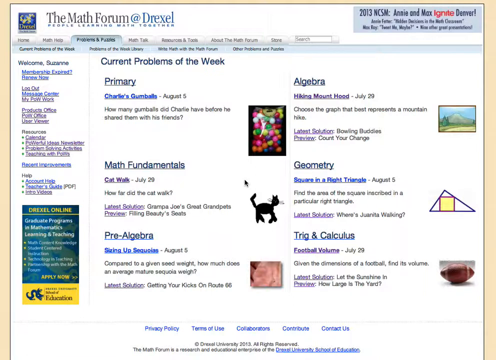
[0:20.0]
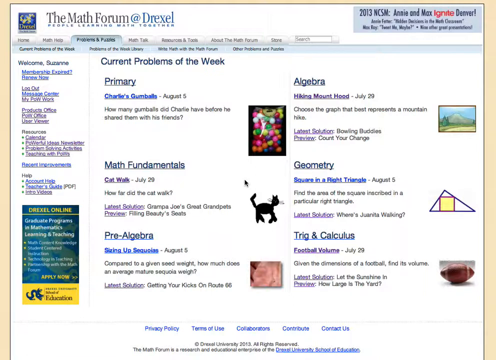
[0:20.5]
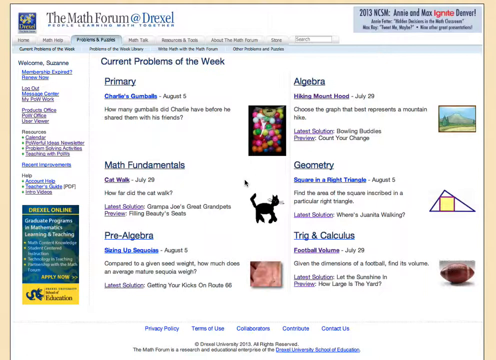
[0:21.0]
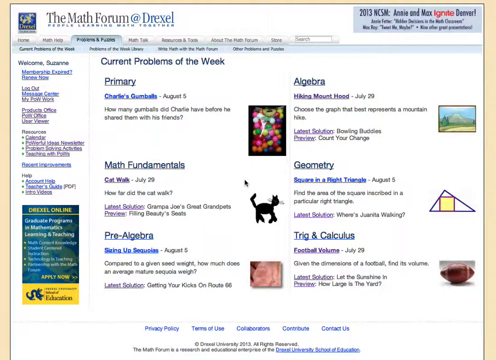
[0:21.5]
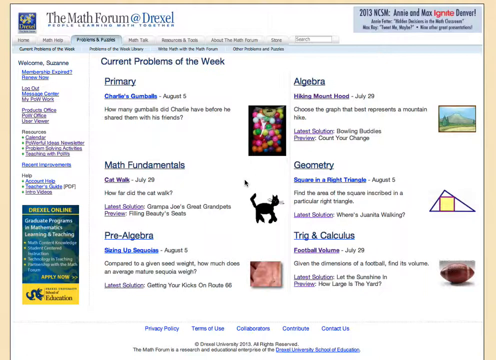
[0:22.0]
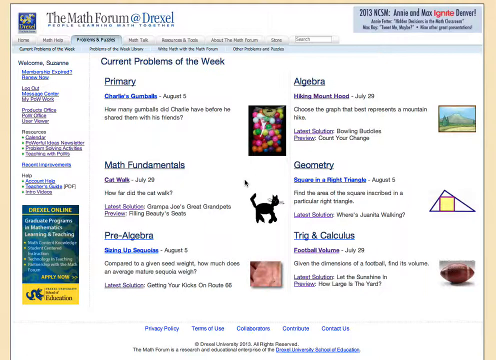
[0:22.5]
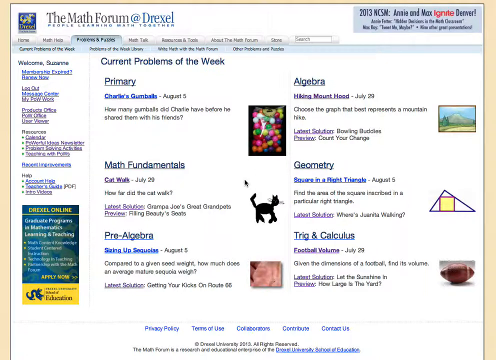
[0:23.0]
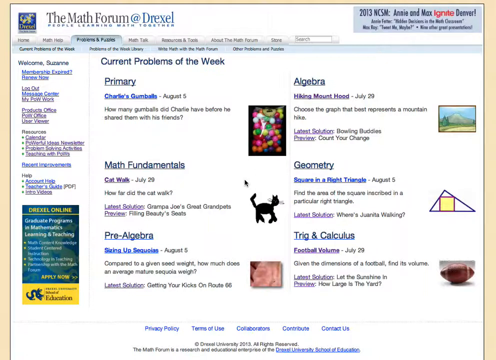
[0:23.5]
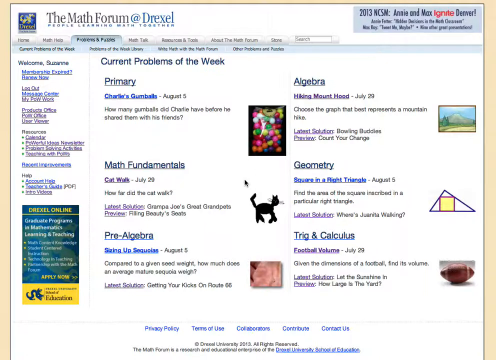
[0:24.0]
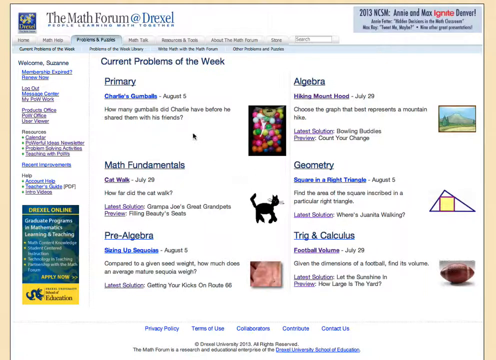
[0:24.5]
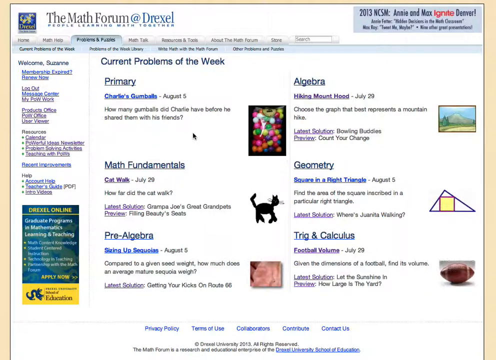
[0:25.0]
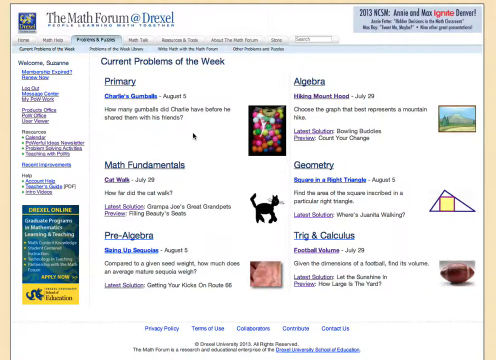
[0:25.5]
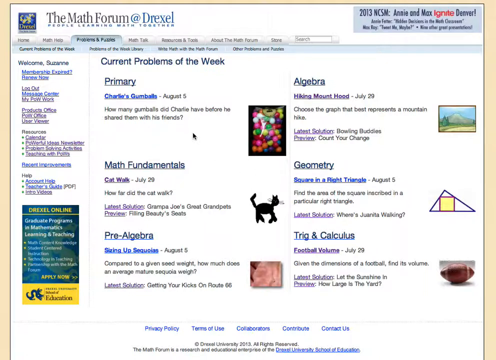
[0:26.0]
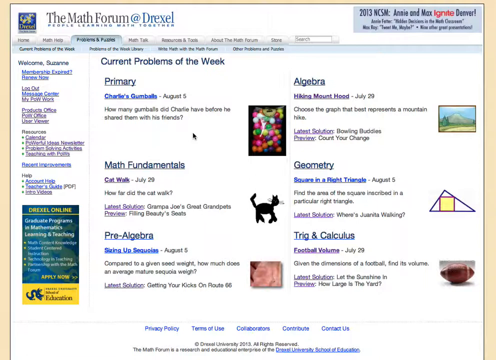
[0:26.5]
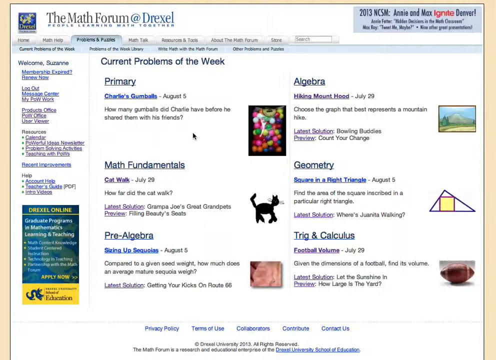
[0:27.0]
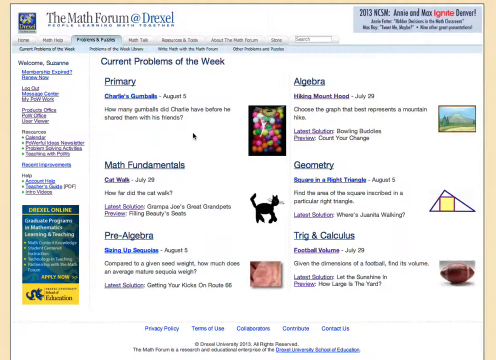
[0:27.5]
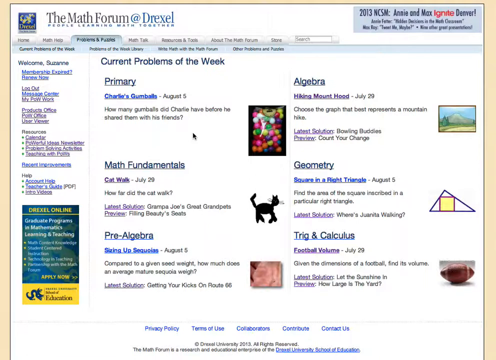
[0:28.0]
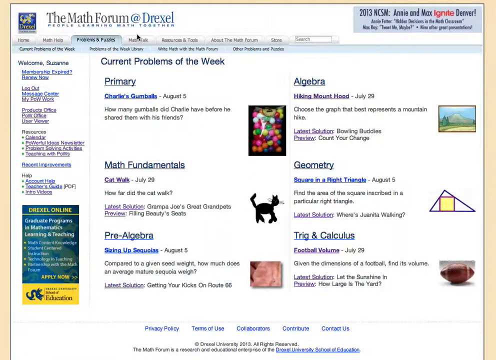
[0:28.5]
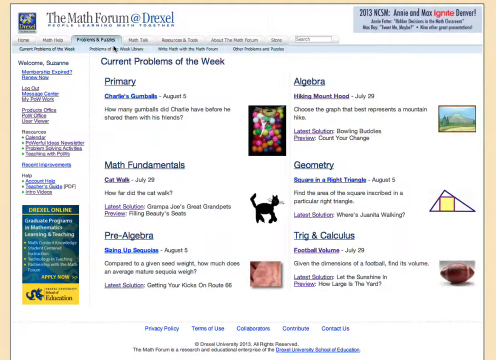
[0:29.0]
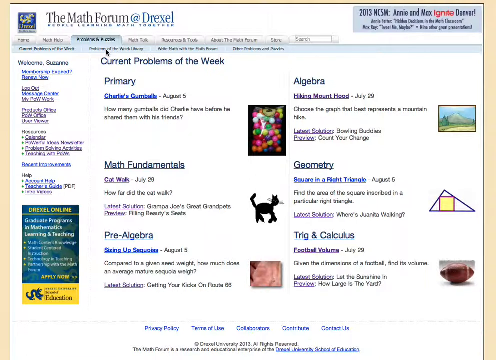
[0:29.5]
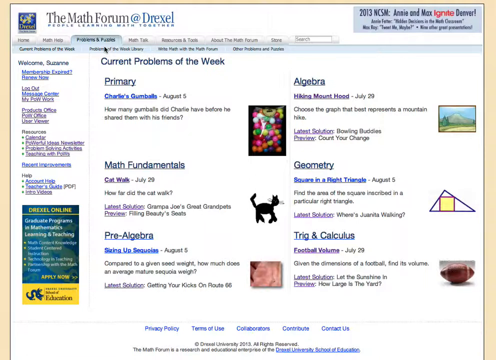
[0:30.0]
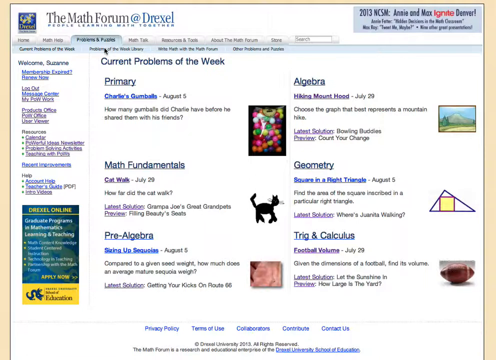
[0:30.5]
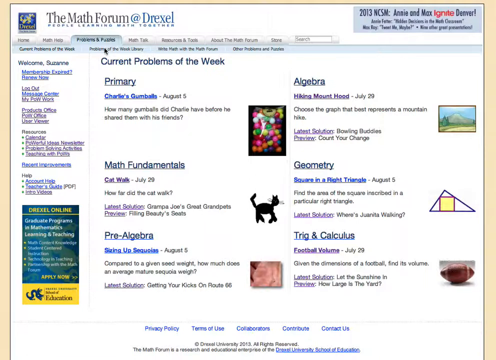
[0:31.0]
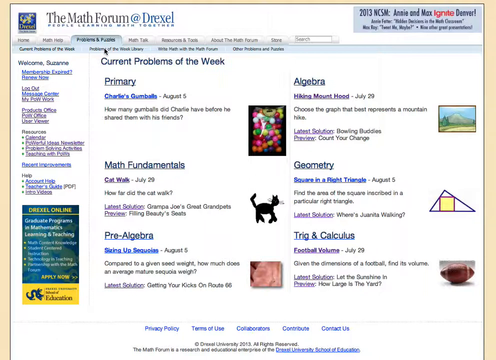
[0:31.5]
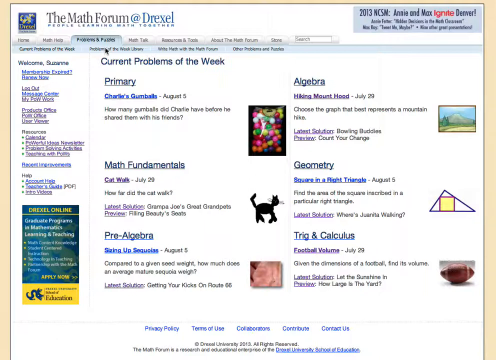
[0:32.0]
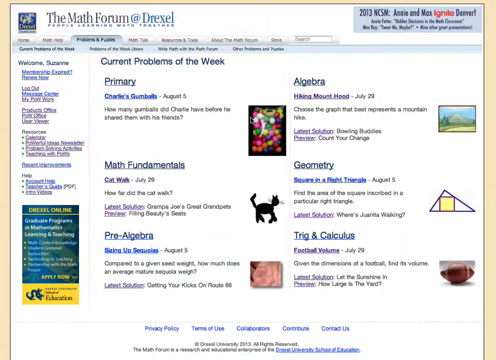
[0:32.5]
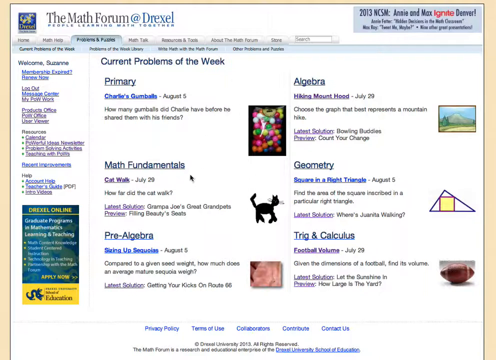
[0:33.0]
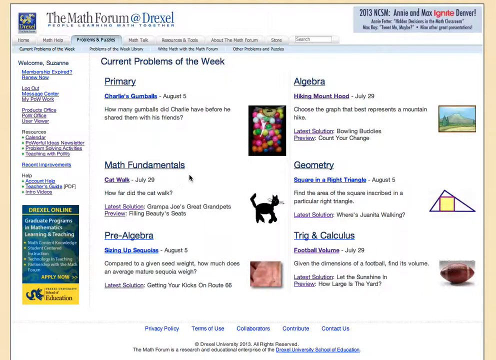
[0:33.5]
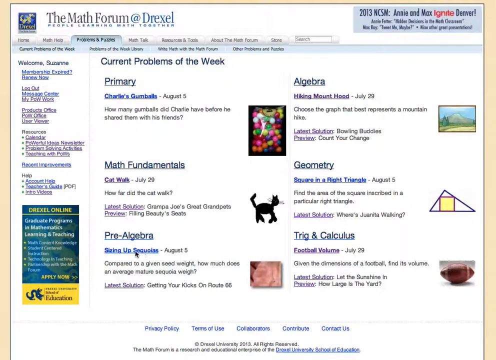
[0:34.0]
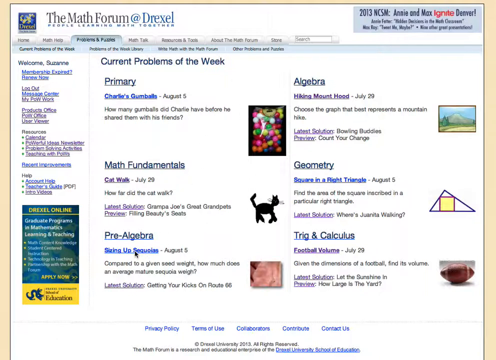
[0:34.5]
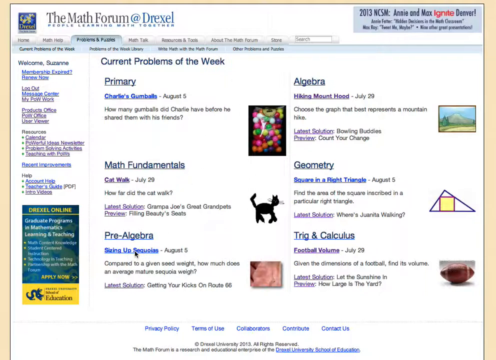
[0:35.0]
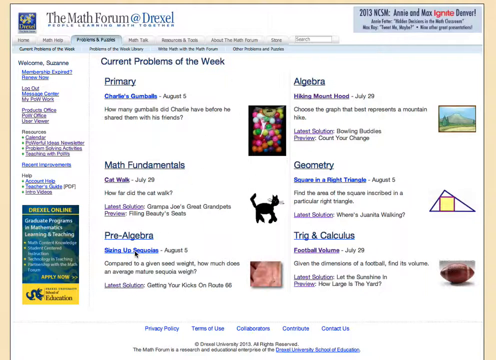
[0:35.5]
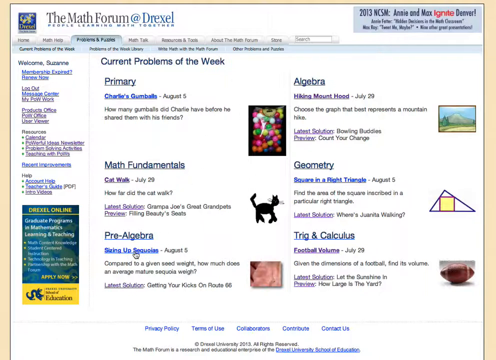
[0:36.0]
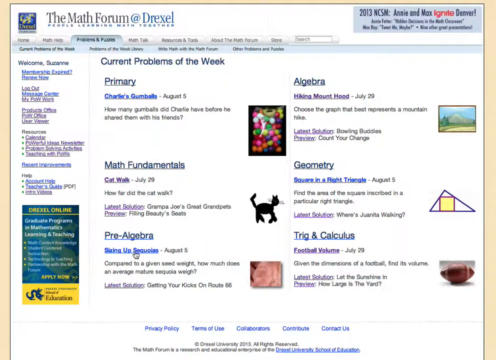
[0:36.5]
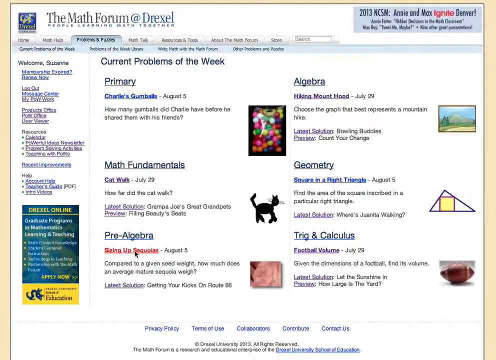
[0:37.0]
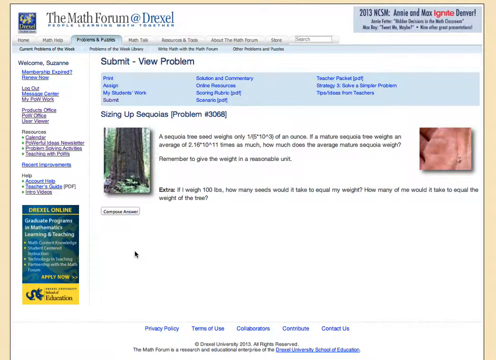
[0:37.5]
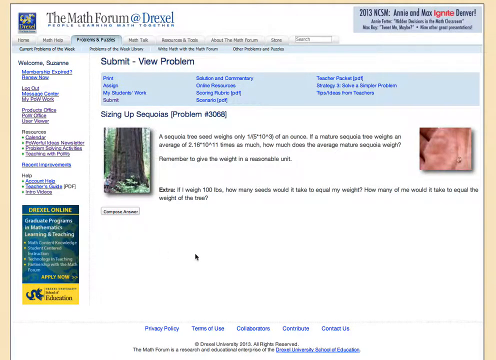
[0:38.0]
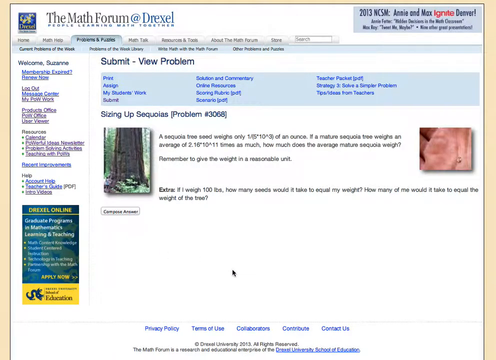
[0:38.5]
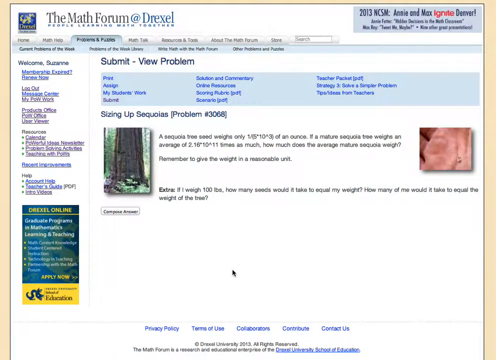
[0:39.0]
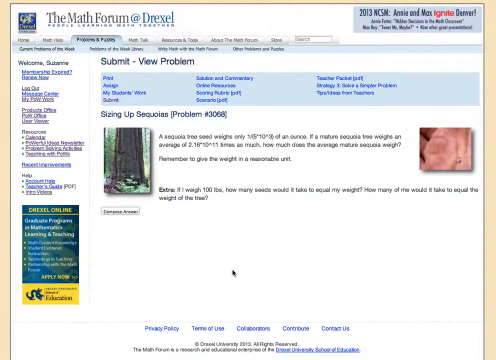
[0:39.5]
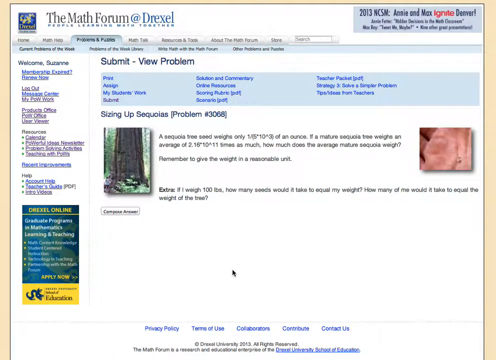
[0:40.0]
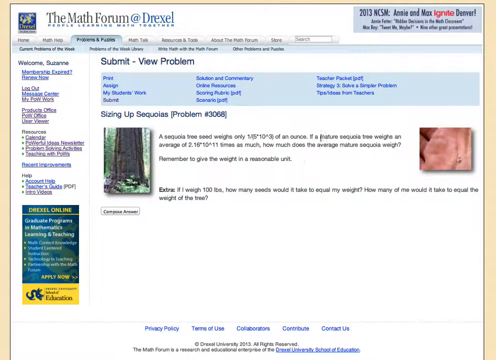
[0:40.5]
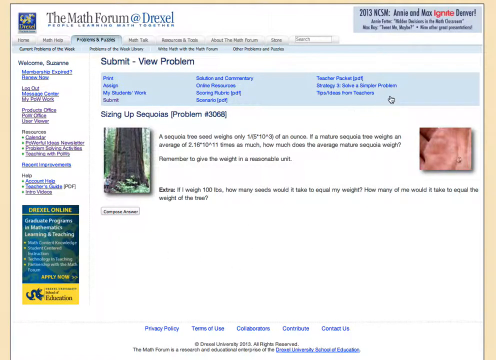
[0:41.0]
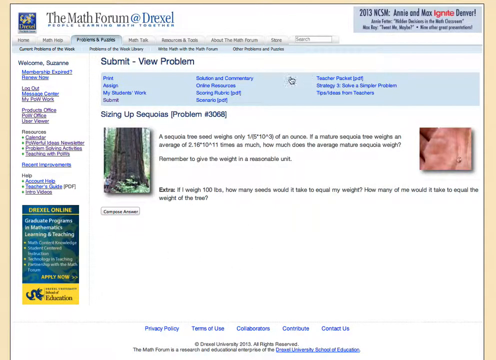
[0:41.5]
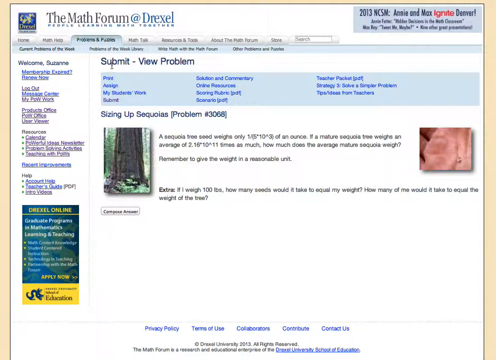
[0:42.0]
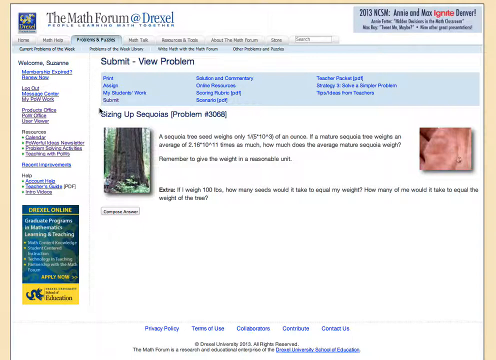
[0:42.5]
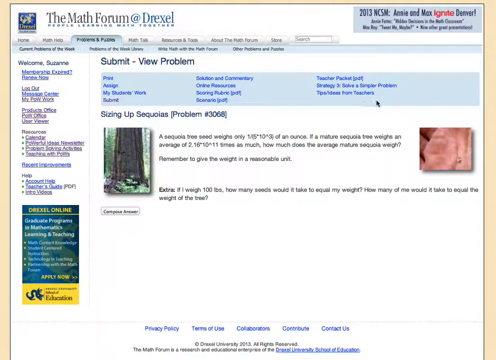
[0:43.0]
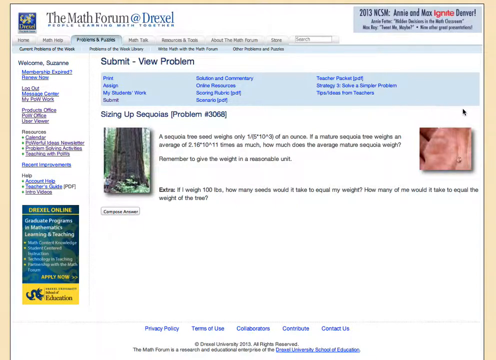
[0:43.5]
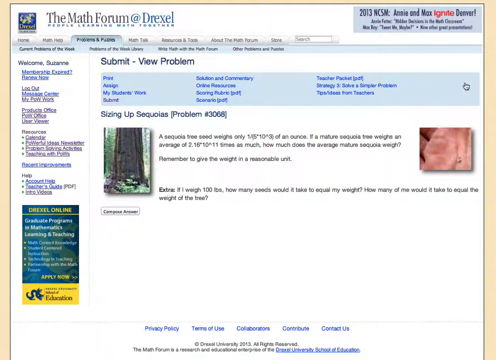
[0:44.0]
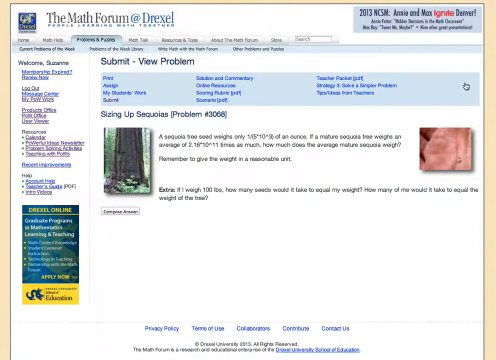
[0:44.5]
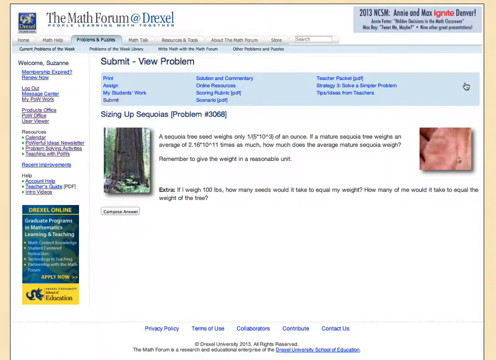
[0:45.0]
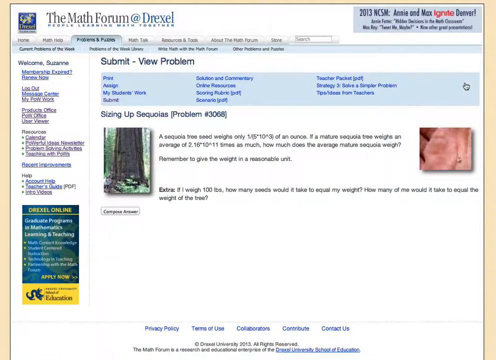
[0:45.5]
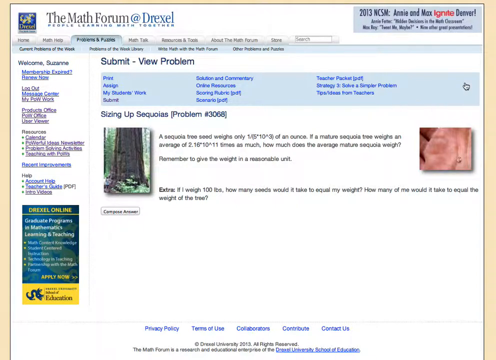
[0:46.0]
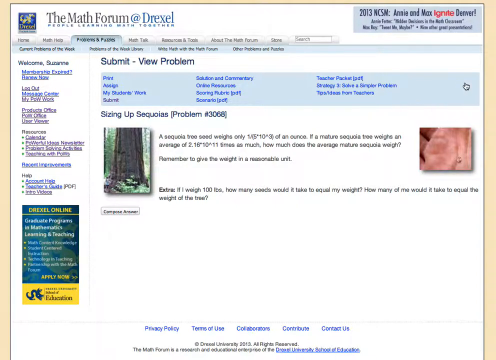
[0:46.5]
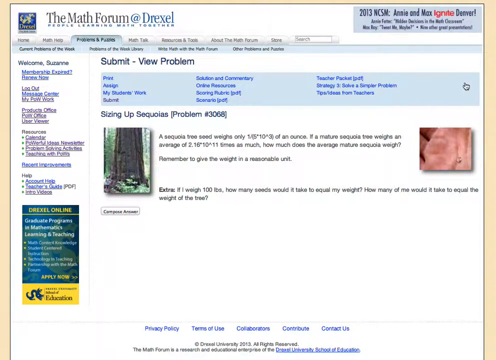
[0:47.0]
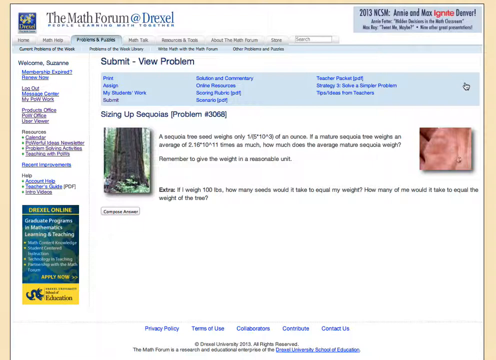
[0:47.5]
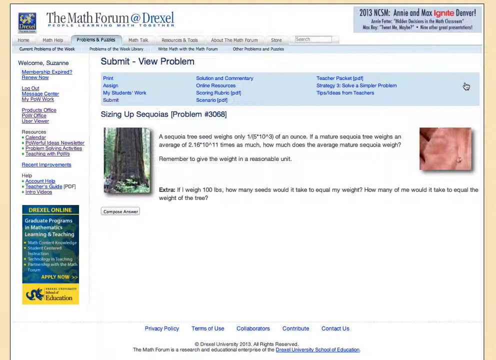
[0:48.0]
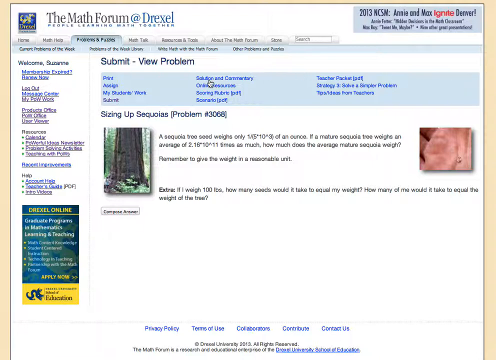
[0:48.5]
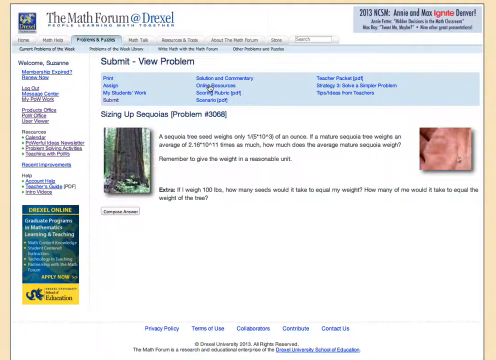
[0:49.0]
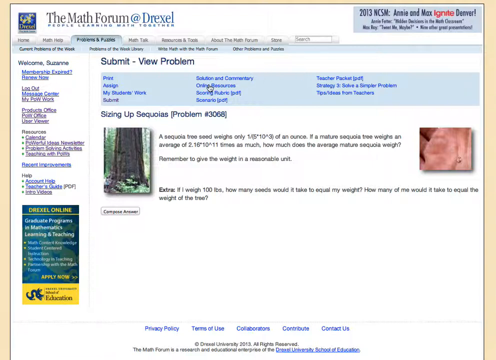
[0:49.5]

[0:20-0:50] What appears to be a webpage is shown. At the top left corner it reads "the math forum at Drexel" and "people learning math," followed by what seems to be "together." The resolution is poor, and many of the words cannot be made out. Below this text is a tab menu: one tab says "home," another apparently says "math help," and the far right tab apparently says "store"; the rest are hard to read. Below the tabs, the readable text says "welcome Suzanne," "membership expired?", "renew now," "log out," "message center," "products," "office," what appears to be "post office," and "calendar." In the bottom left corner there is a vertically aligned green, blue and yellow rectangle that says "Drexel Online, graduate programs in mathematics, learning, and teaching."